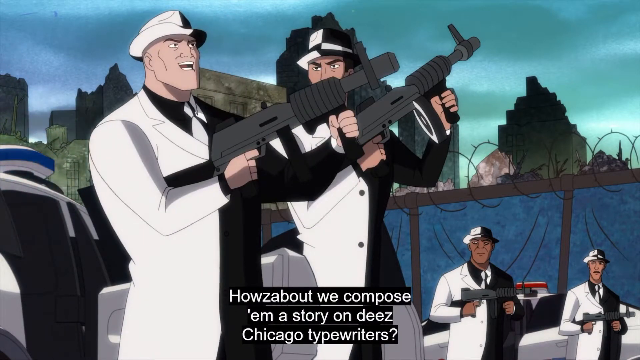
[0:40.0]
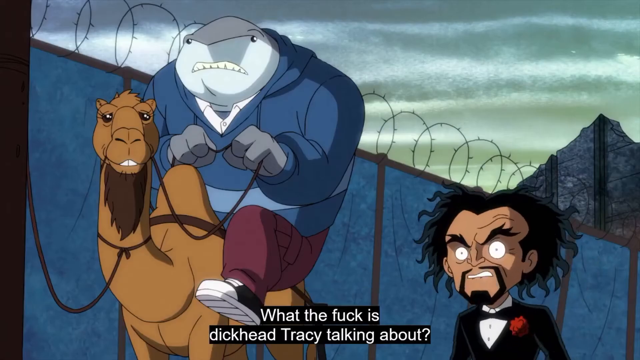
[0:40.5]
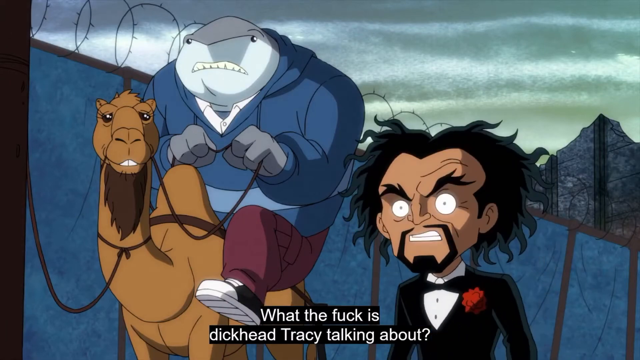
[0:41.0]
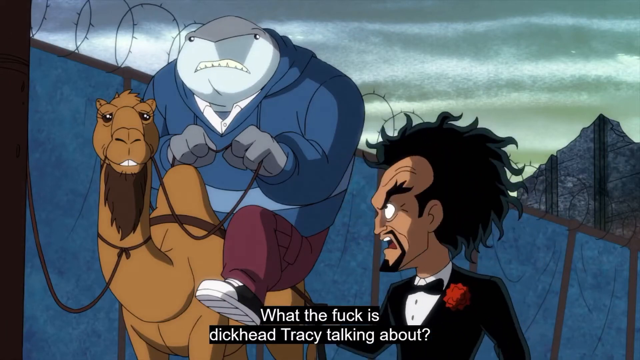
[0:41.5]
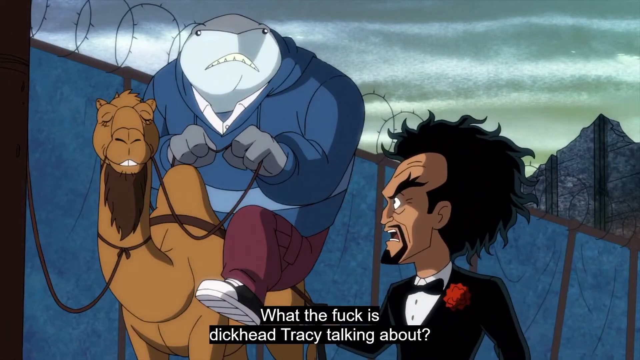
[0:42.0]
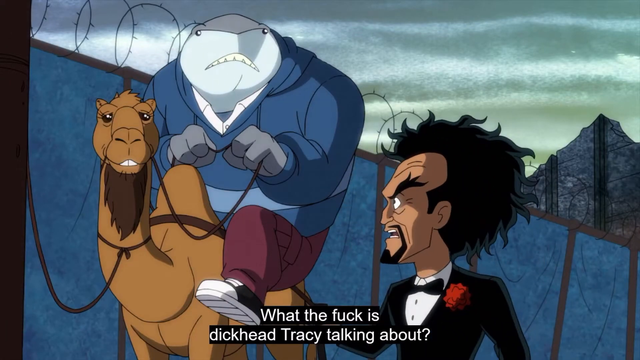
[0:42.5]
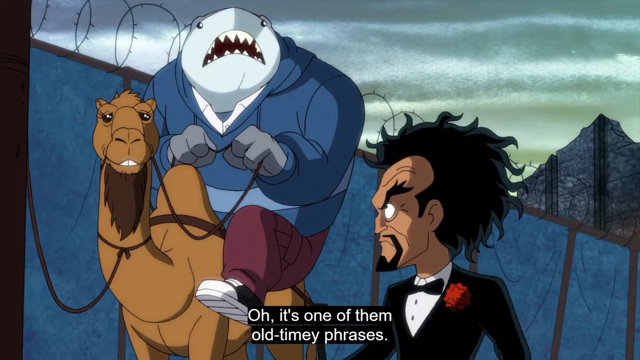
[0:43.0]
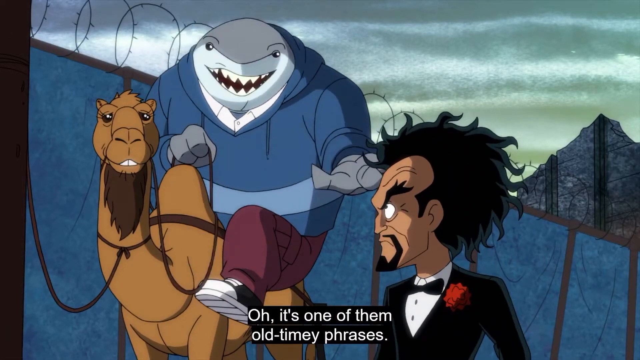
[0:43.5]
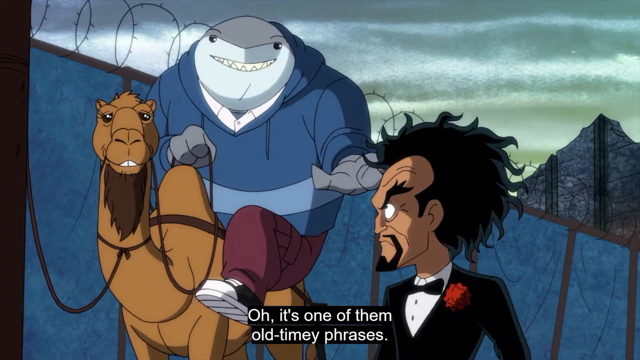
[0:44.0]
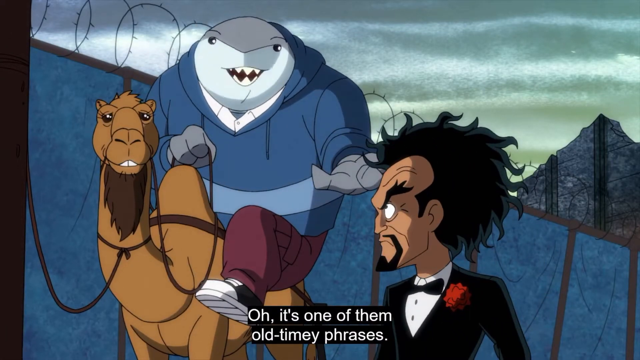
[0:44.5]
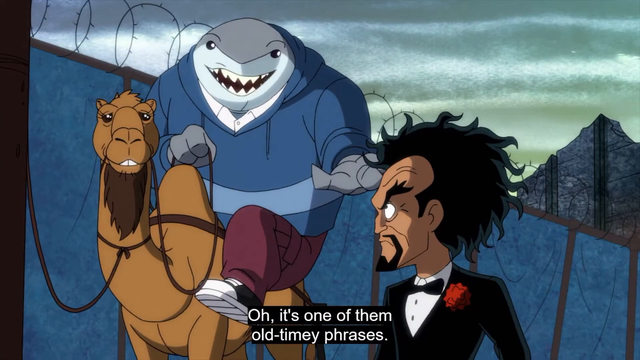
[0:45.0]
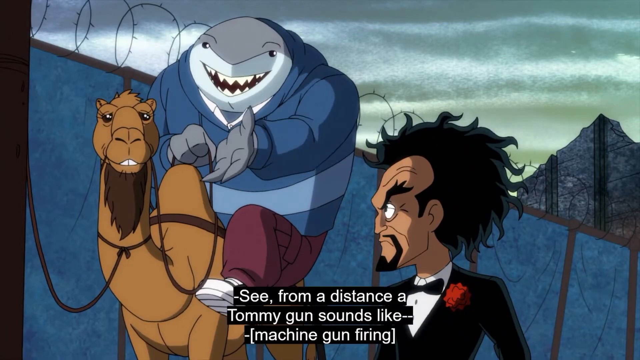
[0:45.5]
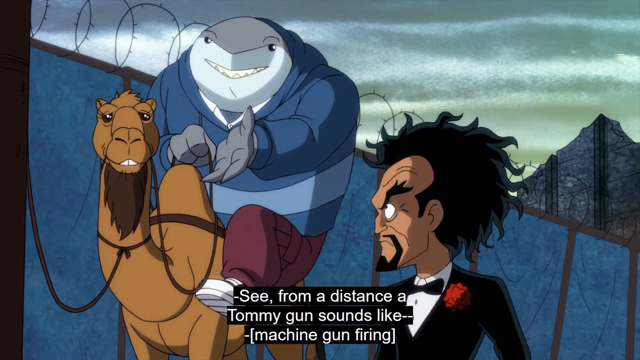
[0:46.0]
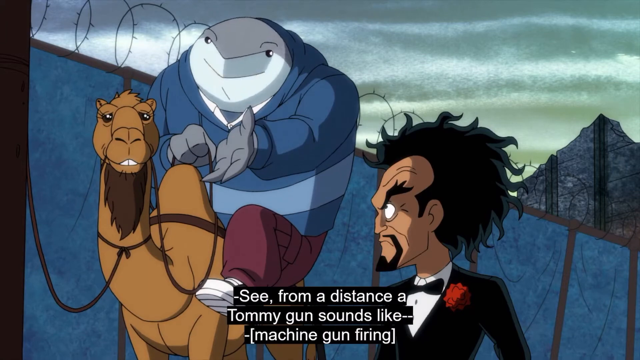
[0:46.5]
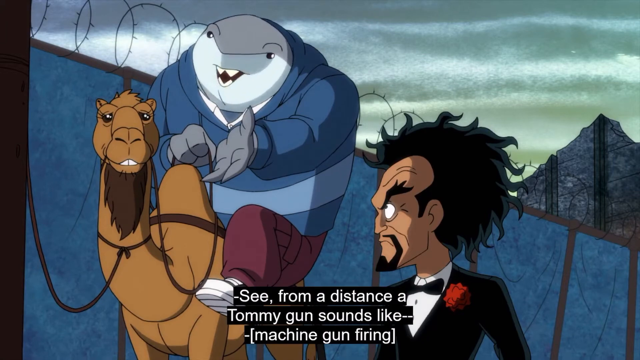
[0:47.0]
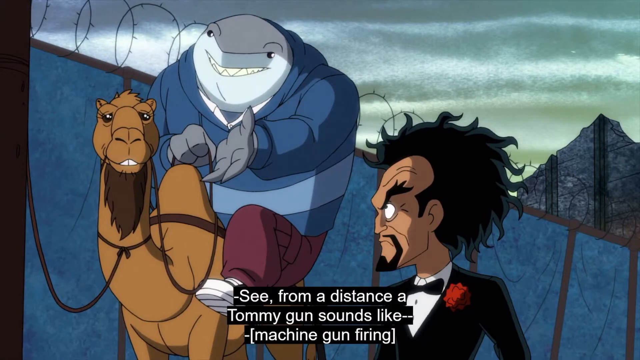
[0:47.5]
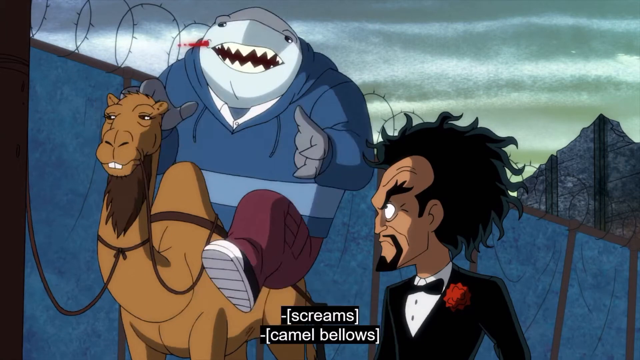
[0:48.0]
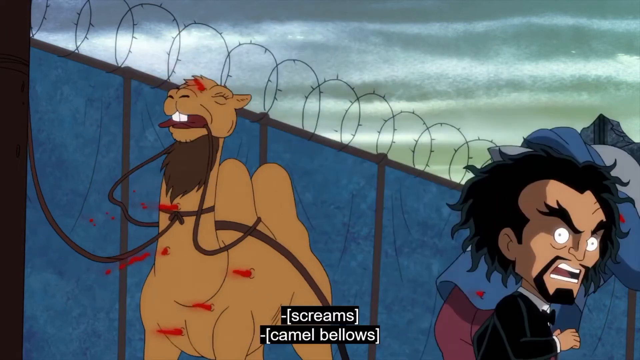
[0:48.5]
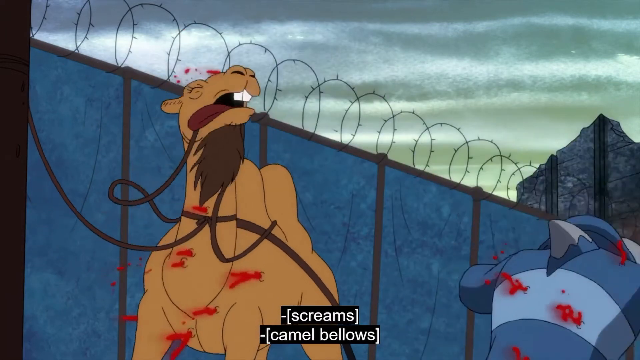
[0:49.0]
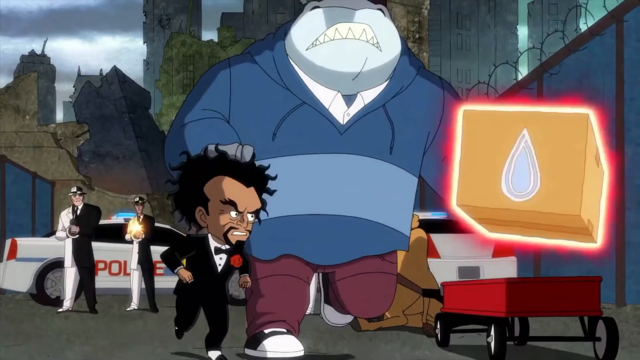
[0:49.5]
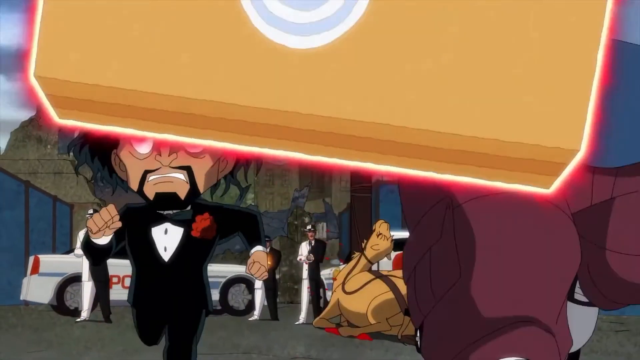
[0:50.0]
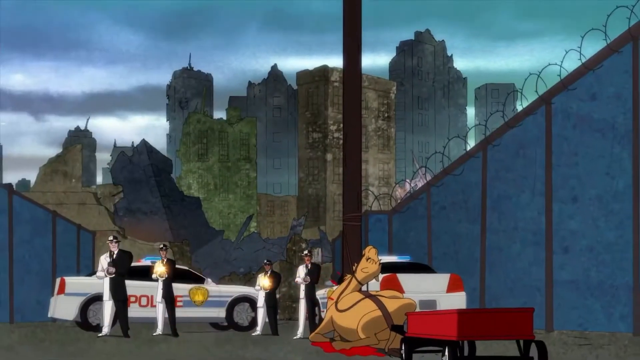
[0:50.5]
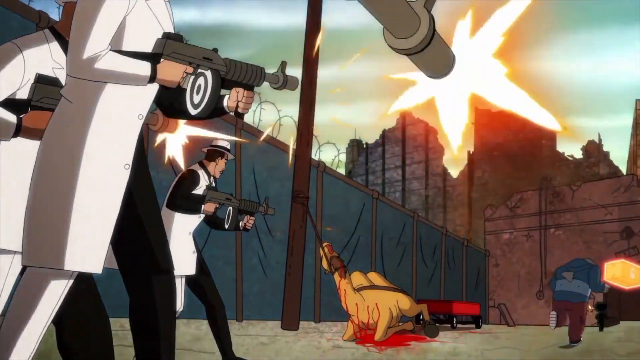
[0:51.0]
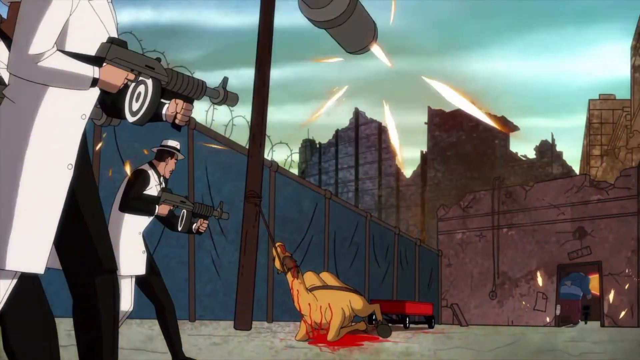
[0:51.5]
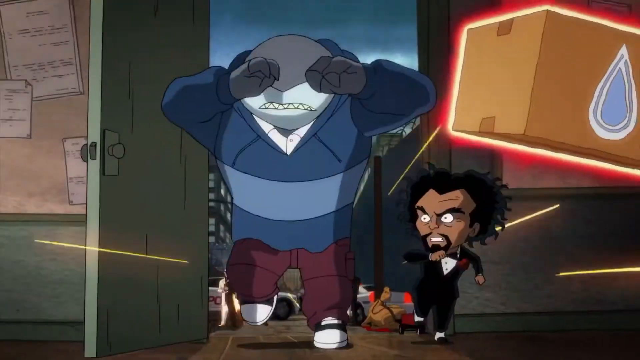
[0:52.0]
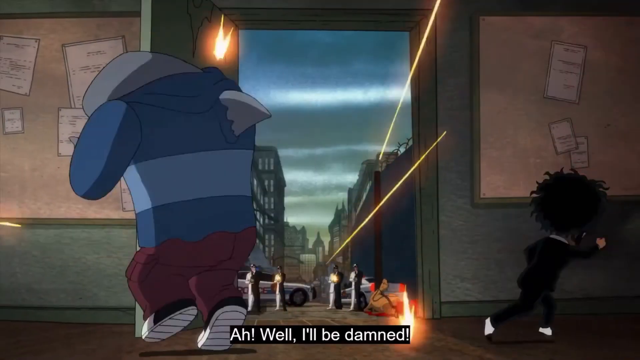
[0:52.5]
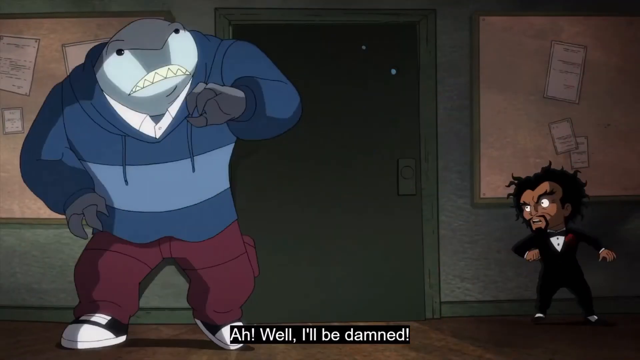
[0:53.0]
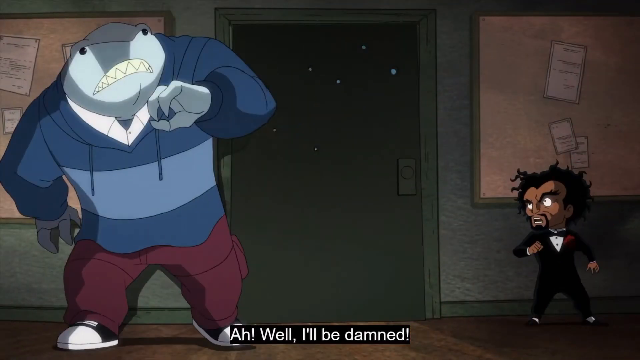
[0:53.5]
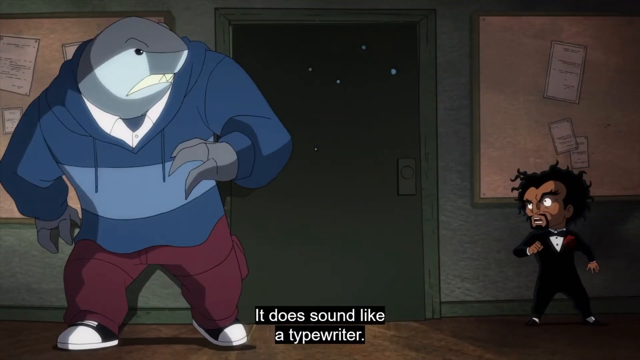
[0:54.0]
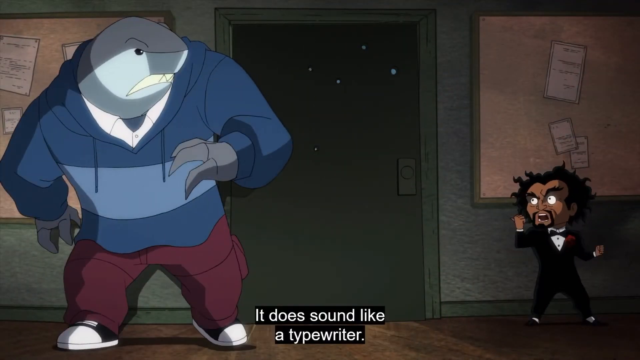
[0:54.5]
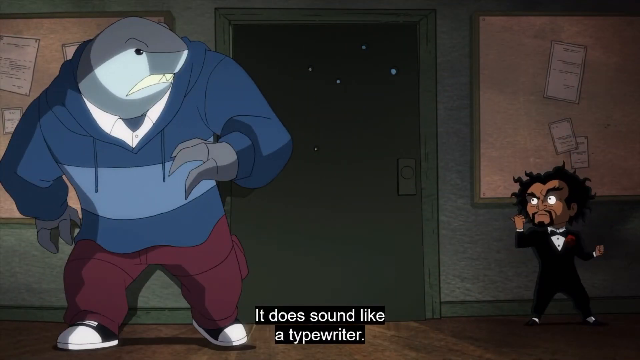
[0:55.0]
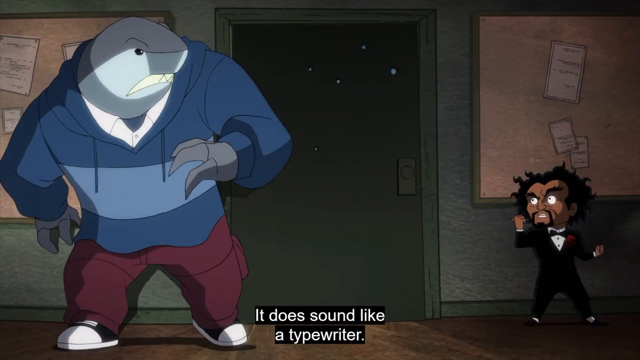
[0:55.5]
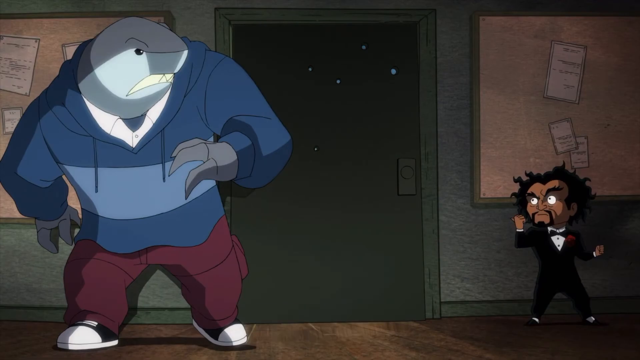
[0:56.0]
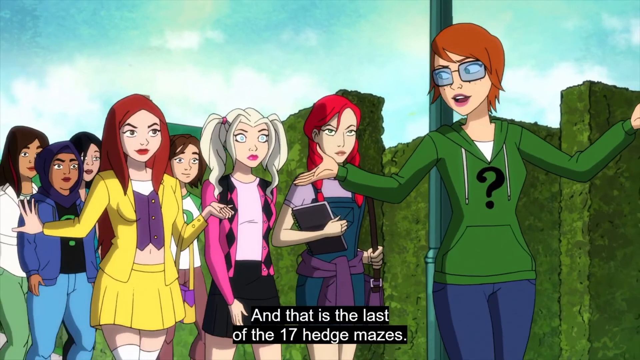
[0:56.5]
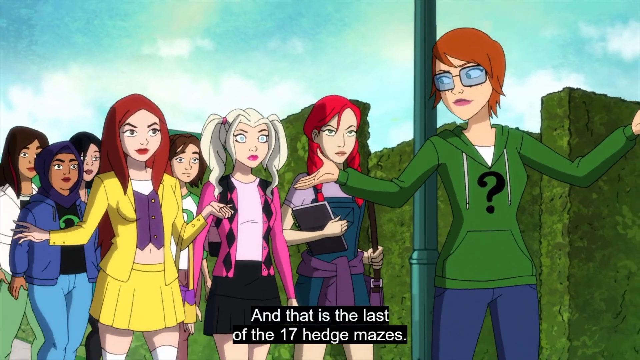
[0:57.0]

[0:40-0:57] The Two-Face people's suits are completely white on the left side and split vertically down the middle, with the other half black with white accents. The shorter man walks in and, cursing, asks something like what they are talking about, and the shark tells him it is an old-timey phrase. The shark starts explaining the Tommy gun just as they are about to be in danger. Machine gun fire breaks out, and the camel and the shark are shot a few times. The shark falls off the camel, and the camel is shot and collapses to the ground. A shot shows the two of them running, with the box flying up along with them. The shark and the short man manage to run away while the Two-Face people behind them are still standing there firing their Tommy guns. They run into a building and the shark closes the door behind them. The shorter man then says it does sound like a typewriter, referring to the Two-Face people's threat. The video ends with a completely different scene: a group of girls walks behind someone wearing a green hoodie with a question mark on it, who presents to the girls, saying that is the last of the 17 hedge mazes.